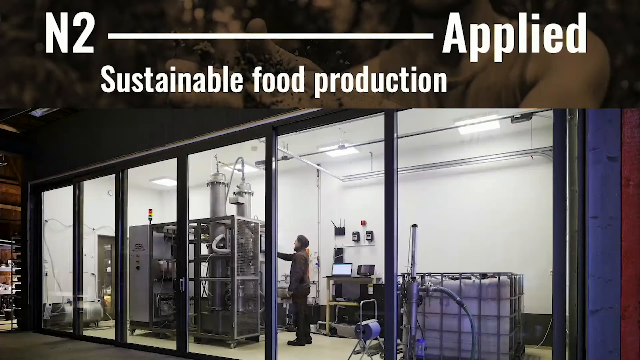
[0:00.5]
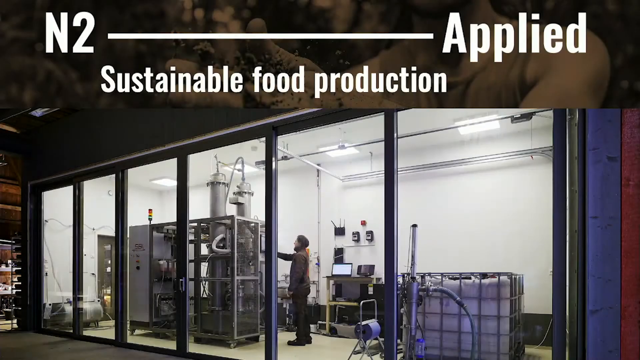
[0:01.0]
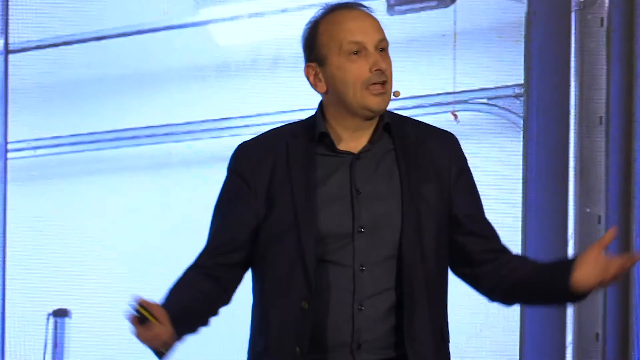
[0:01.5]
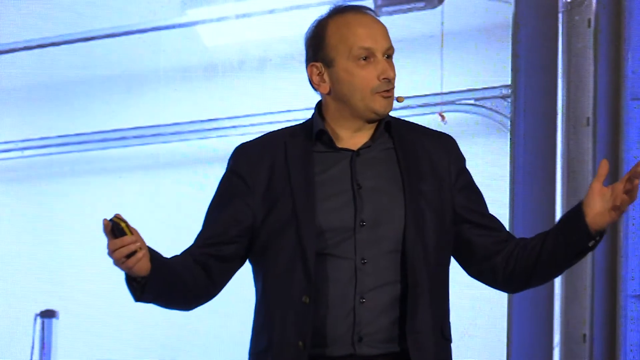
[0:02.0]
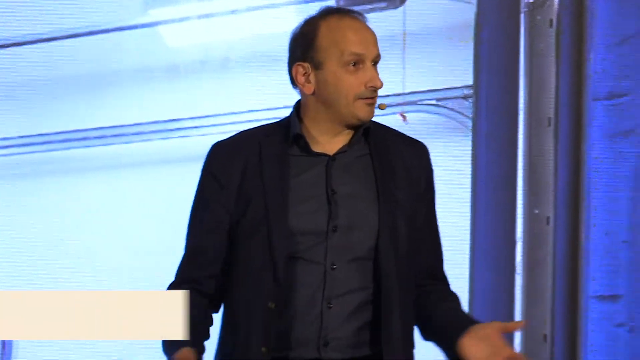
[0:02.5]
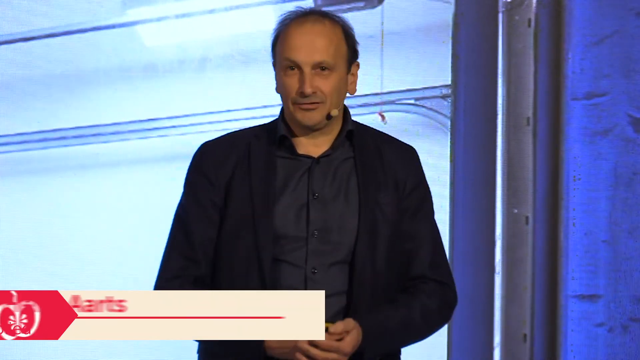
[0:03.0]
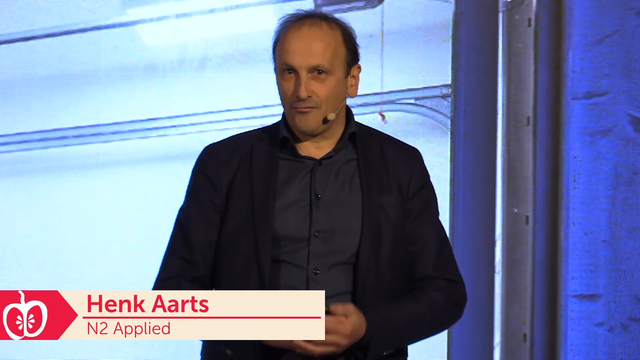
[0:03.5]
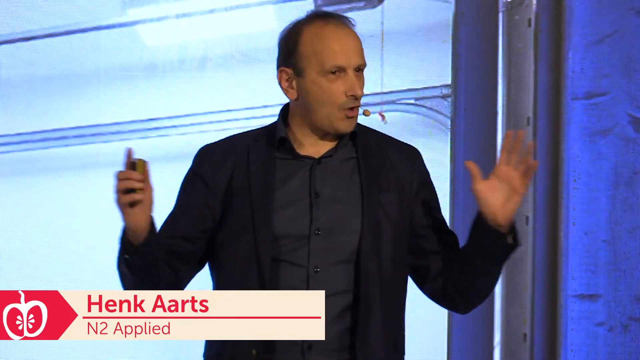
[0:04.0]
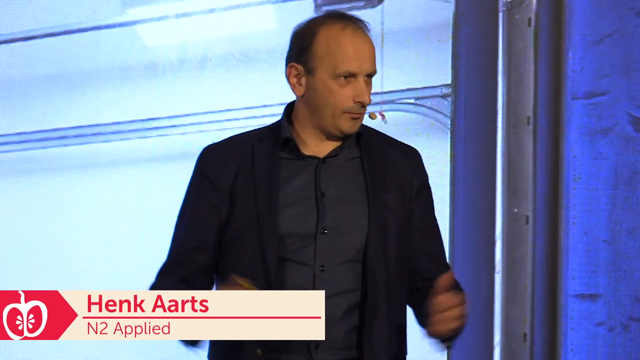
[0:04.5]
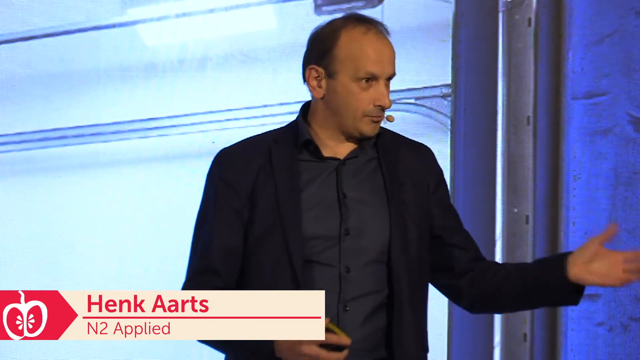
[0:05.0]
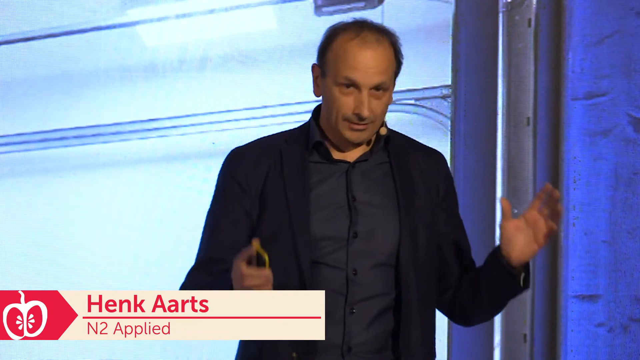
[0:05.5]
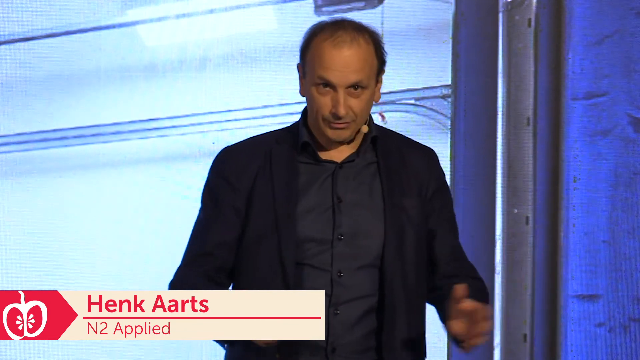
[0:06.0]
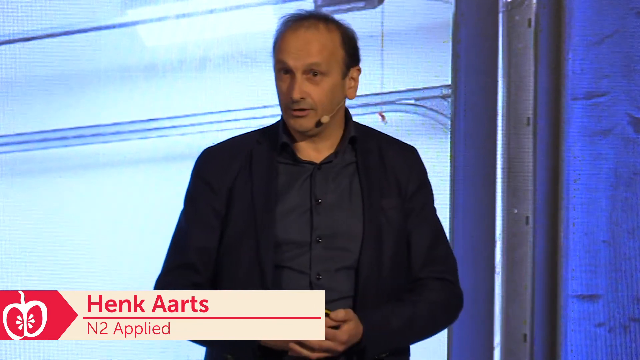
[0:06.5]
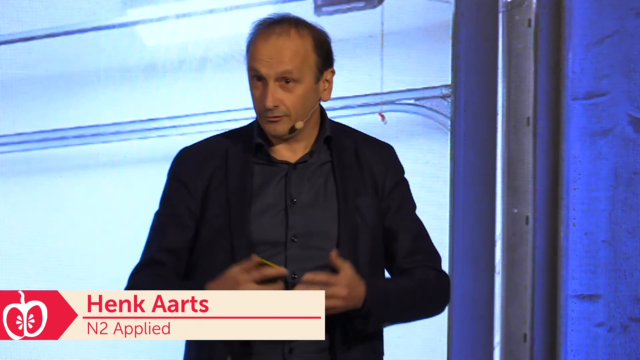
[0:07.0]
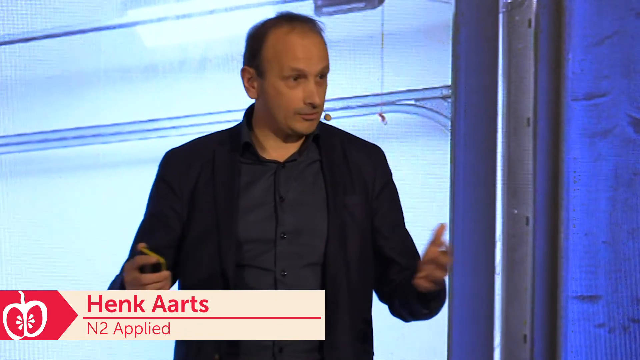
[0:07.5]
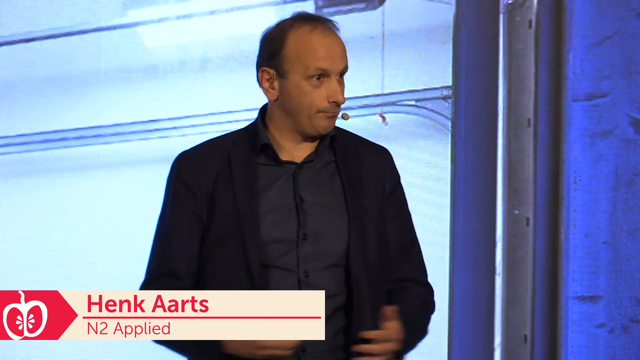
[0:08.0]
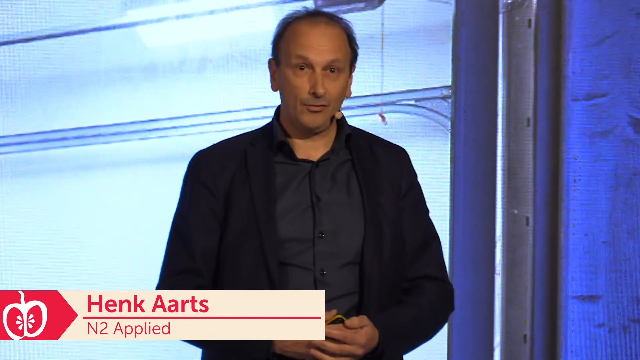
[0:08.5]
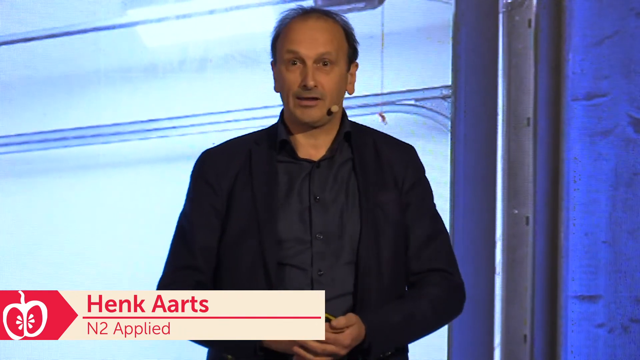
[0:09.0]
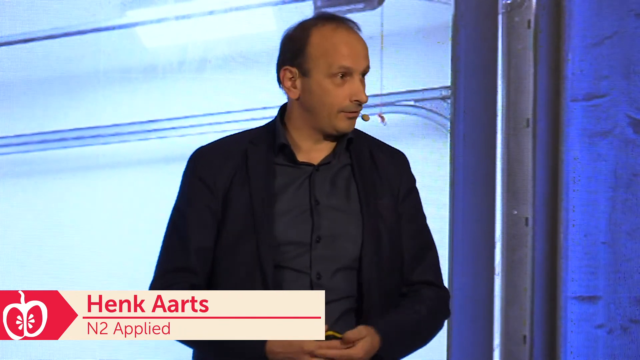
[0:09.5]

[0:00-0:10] The video begins with a glimpse of what looks like a manufacturing plant for food. Indoors, the view looks through a window into a room with high-tech machinery. One man stands in front of a processing machine, facing west. The walls are very white and sterile looking. At the top, white text reads "N2" on the left side and "applied". Below that it reads "sustainable food production". The video then cuts to a man seen from the waist up in a black suit jacket and a black collared shirt with no tie. He looks approximately in his late 40s, Caucasian, with sparse brown hair, and he is standing in front of what looks like a backdrop that is not fully described.